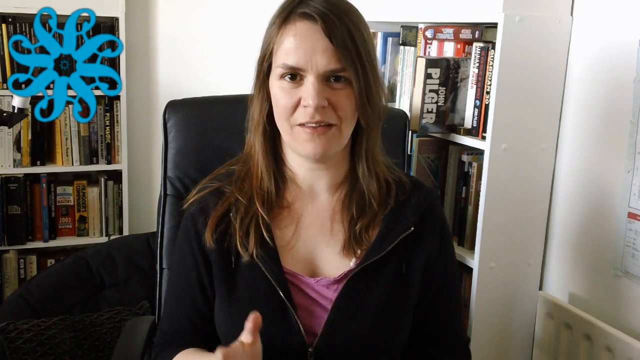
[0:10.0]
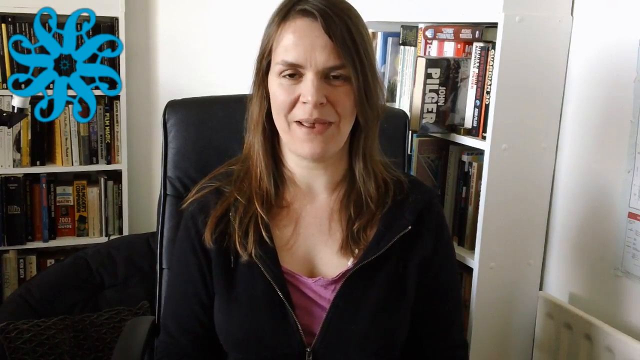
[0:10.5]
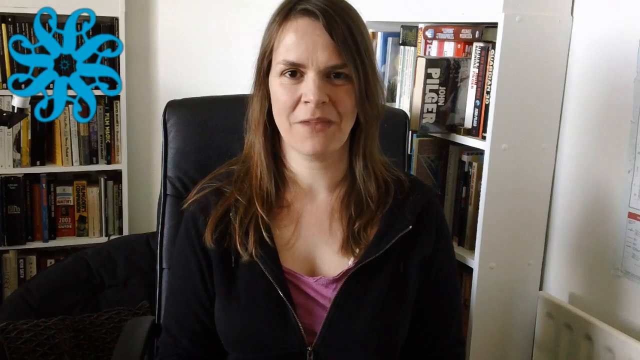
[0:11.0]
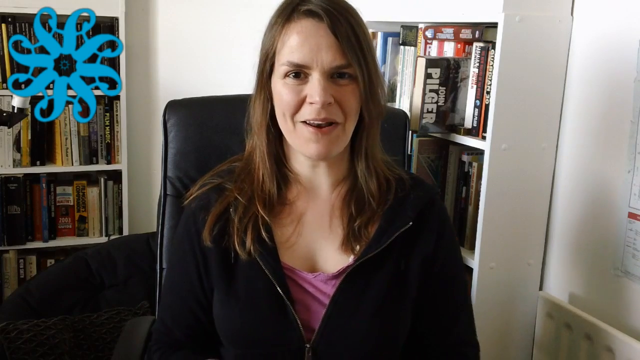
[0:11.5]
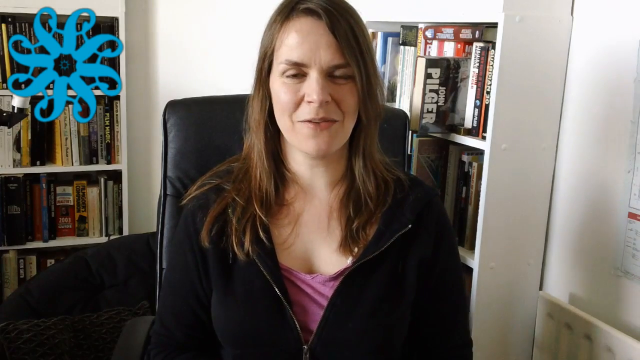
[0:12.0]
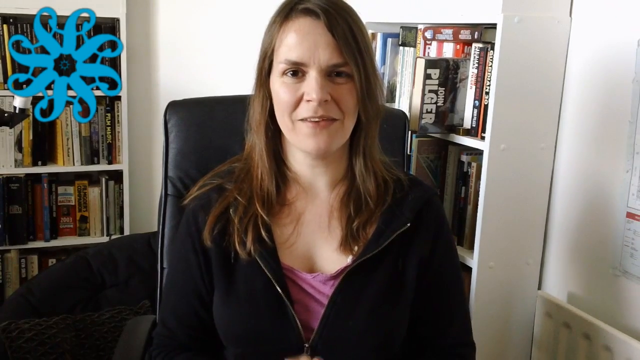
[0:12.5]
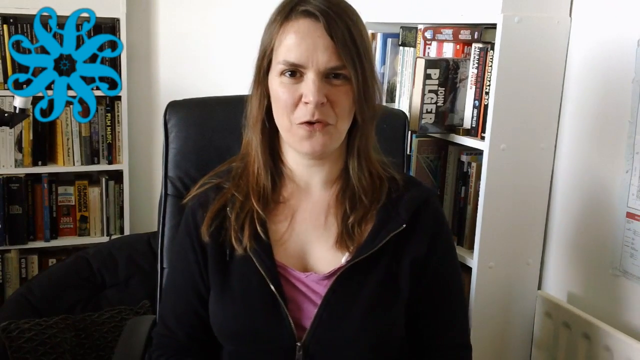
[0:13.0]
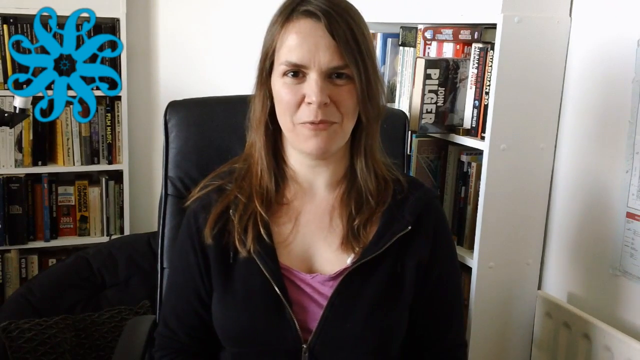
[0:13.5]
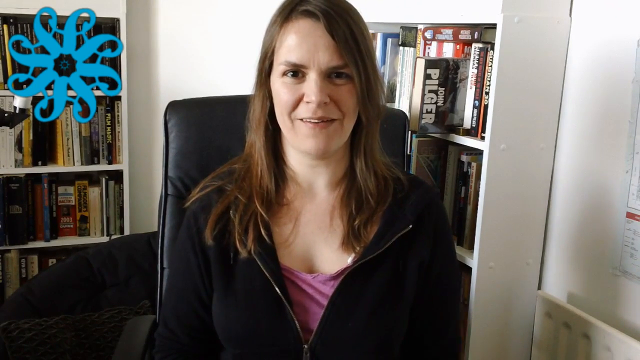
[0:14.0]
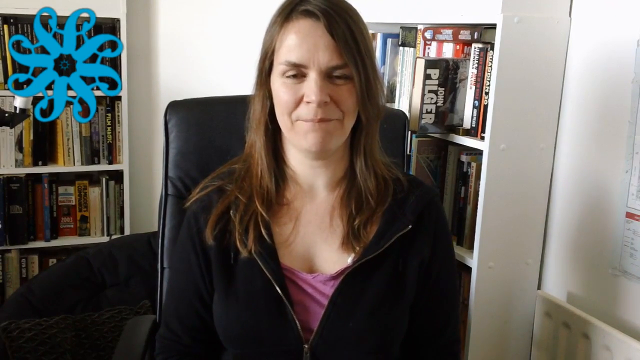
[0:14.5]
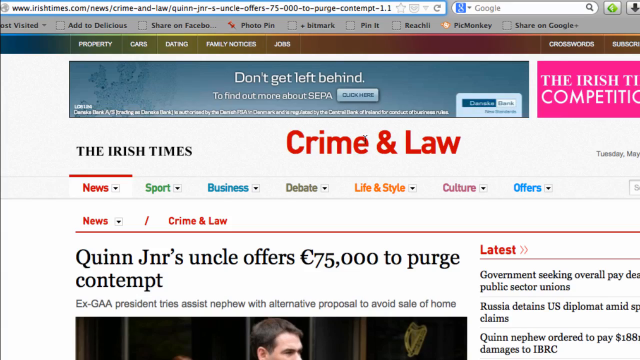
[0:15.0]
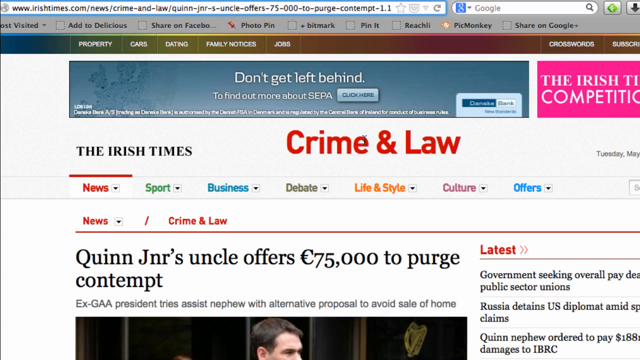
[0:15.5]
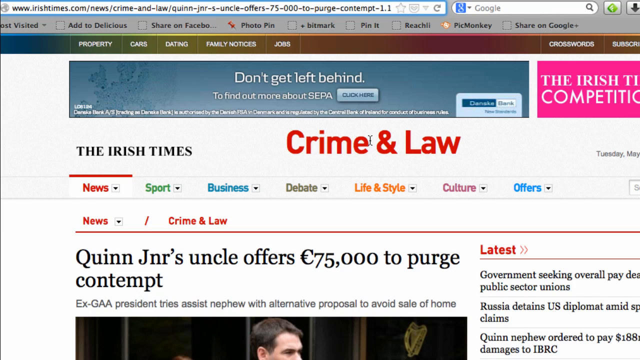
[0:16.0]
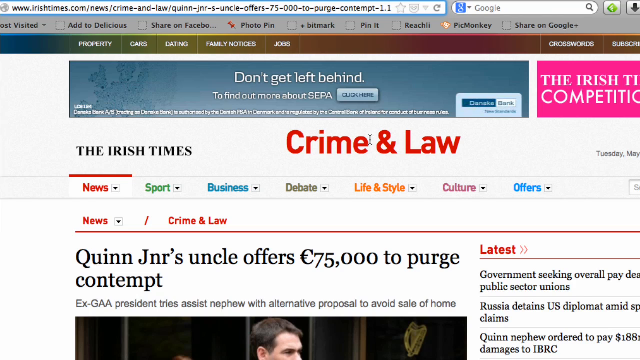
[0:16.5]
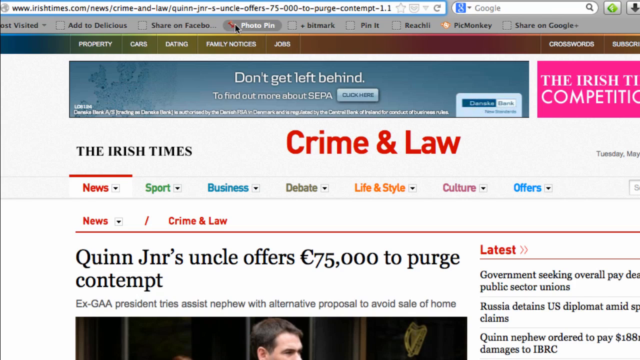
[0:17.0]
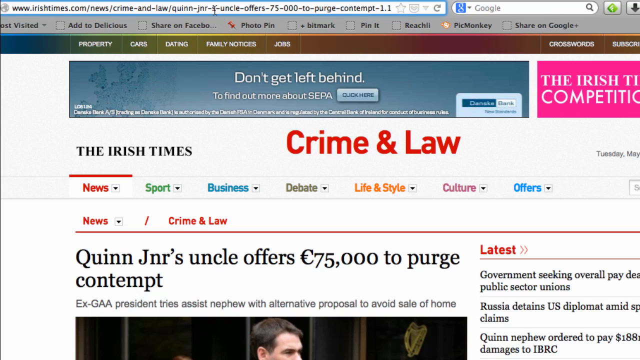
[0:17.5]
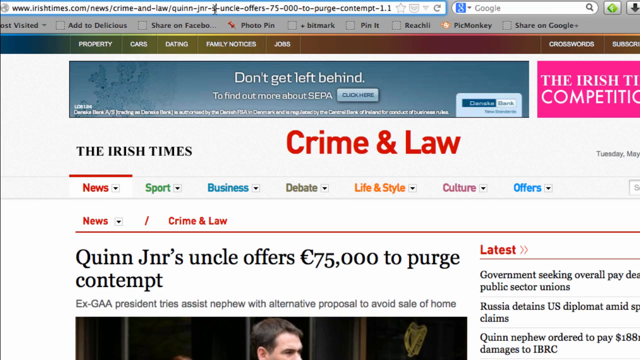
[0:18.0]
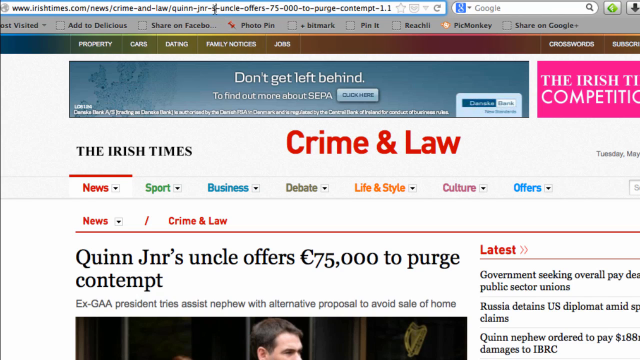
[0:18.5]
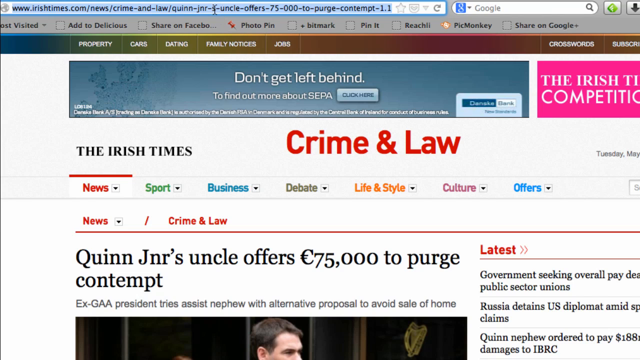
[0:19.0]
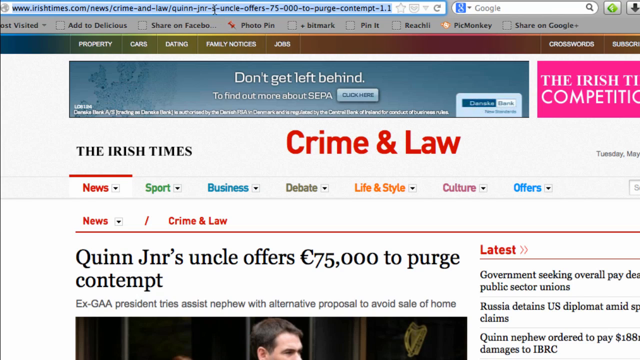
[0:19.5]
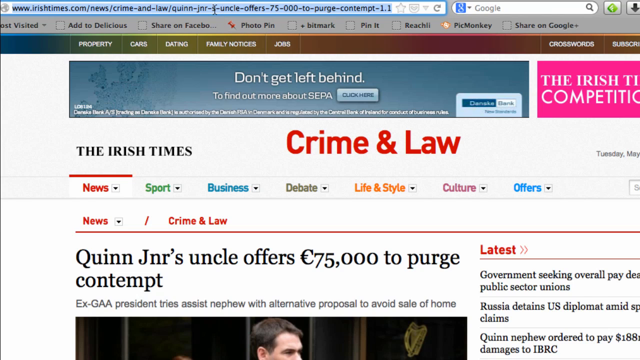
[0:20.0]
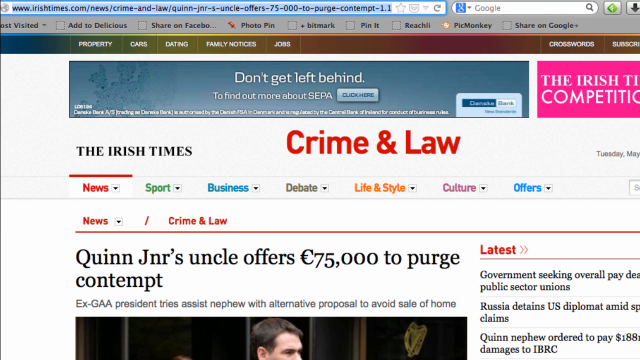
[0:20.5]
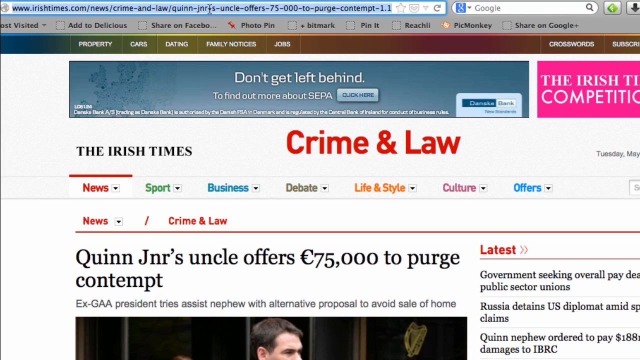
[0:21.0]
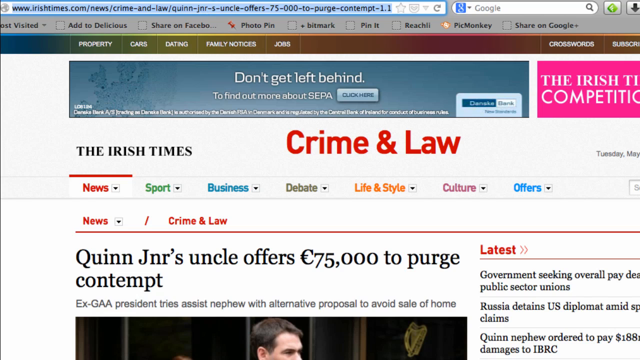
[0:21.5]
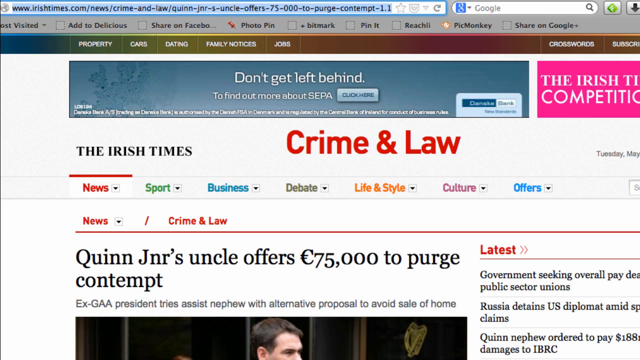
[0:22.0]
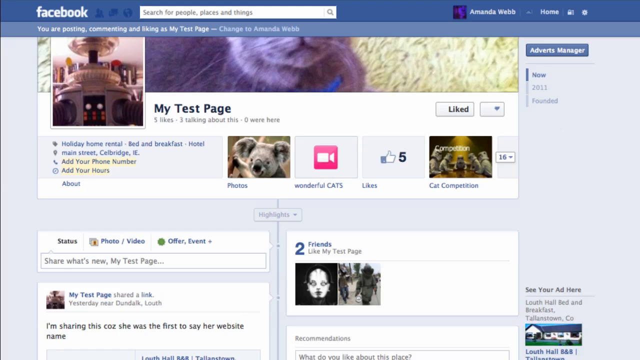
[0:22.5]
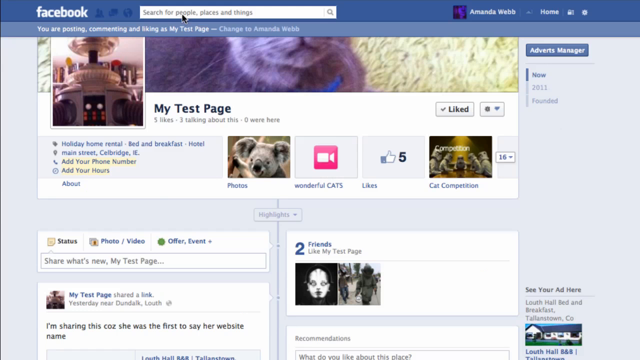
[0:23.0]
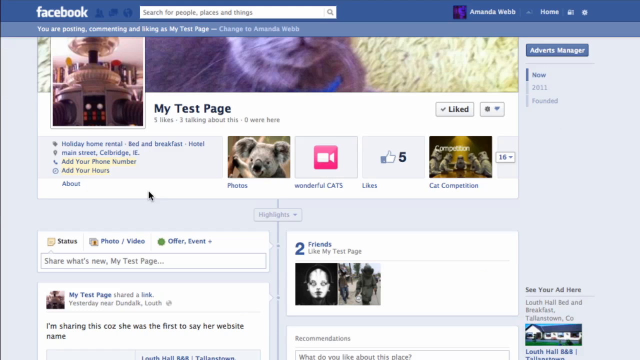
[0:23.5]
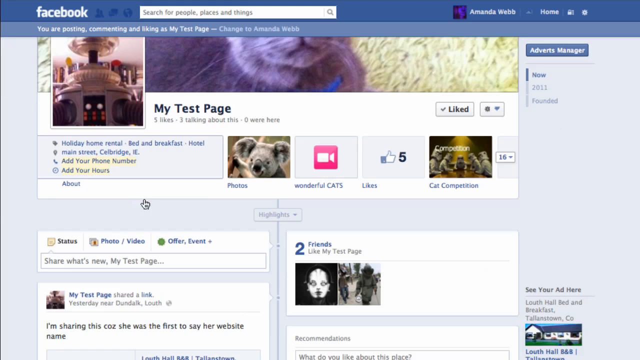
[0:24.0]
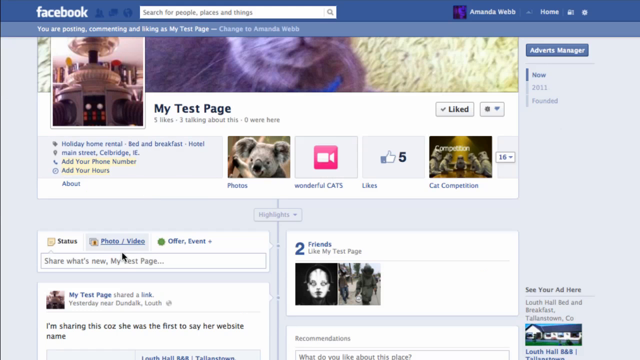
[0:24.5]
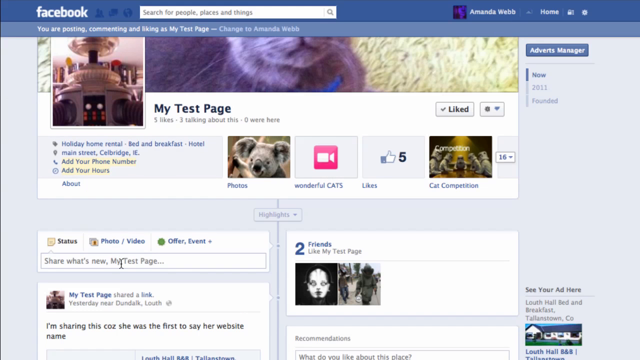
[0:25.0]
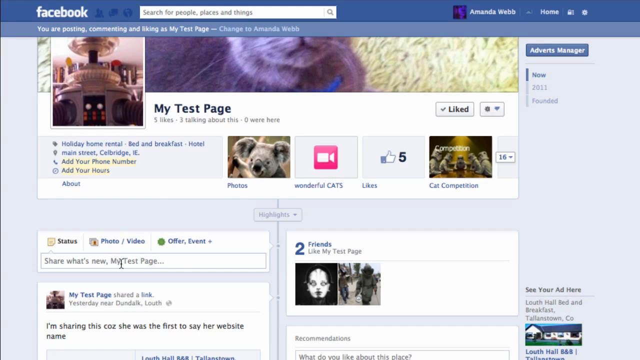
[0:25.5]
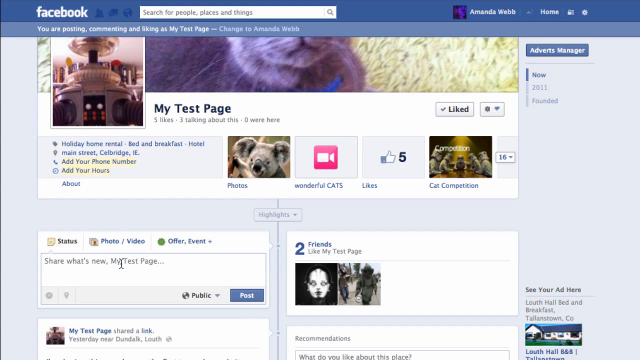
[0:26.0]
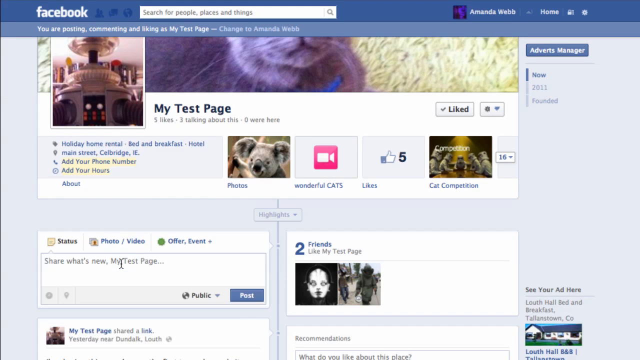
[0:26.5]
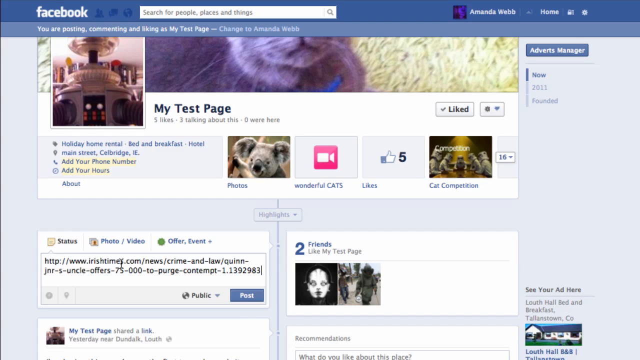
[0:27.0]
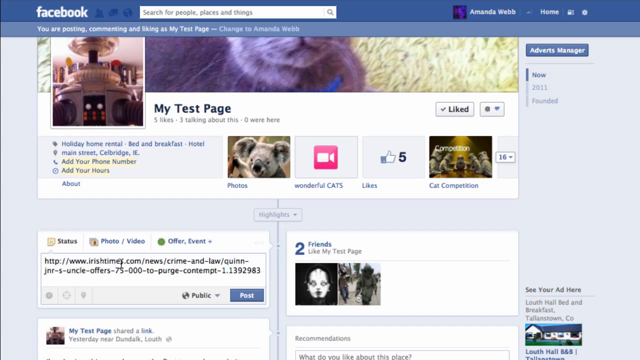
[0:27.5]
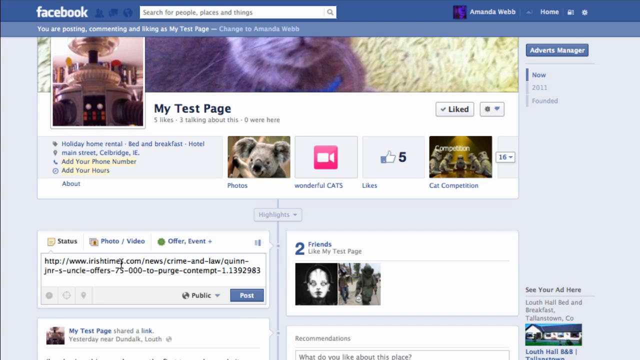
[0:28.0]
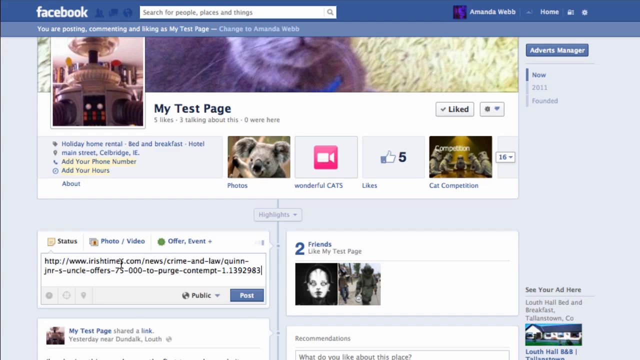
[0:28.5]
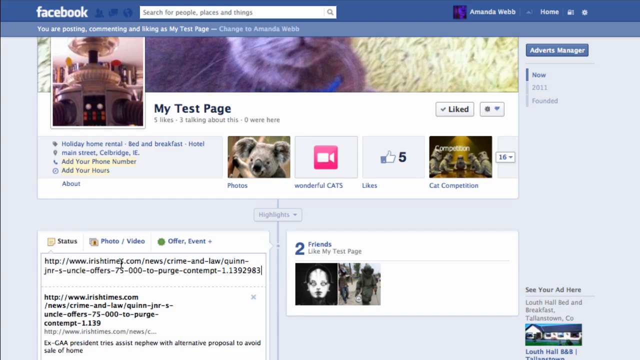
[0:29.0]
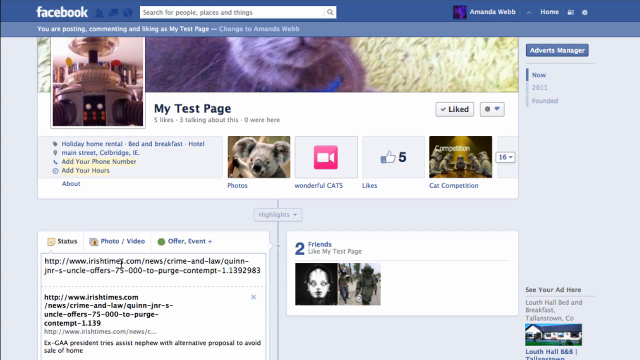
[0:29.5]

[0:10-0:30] Amanda, from spiderwaking.com, is in the office wearing a black jacket with a purple top underneath, talking on screen. A page shows "crime and law", "the Irish Times", "news" and "sports", and a test page shows animals. Text reads "Don't get left behind to find out more about SEPA, click here." A menu lists "Sports, news, sports, business, life and style, culture". Headlines include one about an offer of £75,000, one ending "alternative proposal to avoid sale of home", "Government seeking overall pay delay public sector unions" and "Russians detains US diplomat amid claims". Another page then appears, possibly the top page.